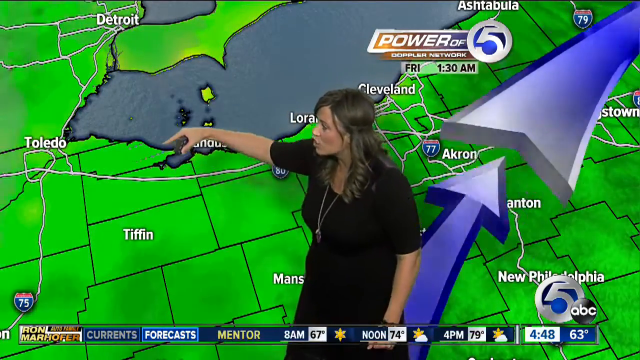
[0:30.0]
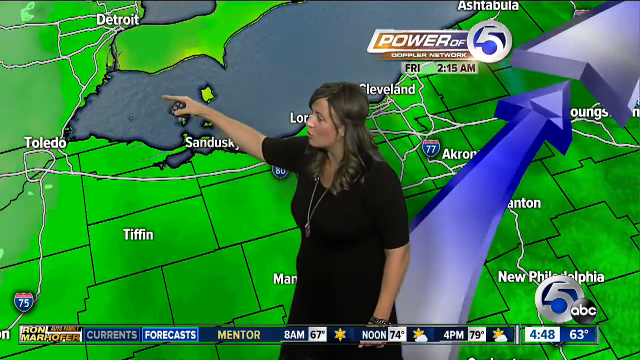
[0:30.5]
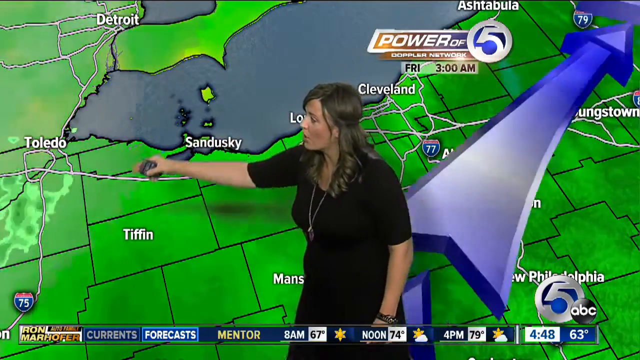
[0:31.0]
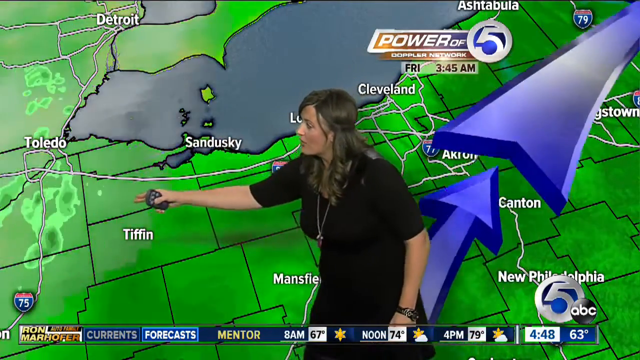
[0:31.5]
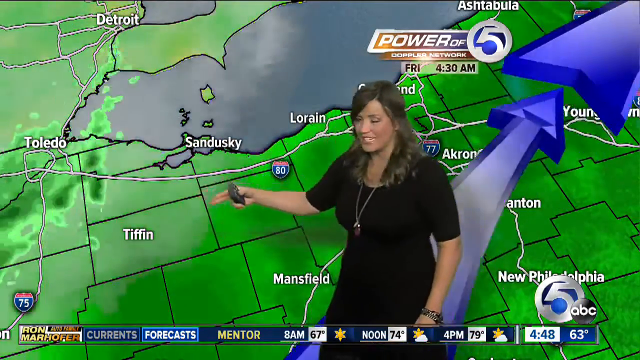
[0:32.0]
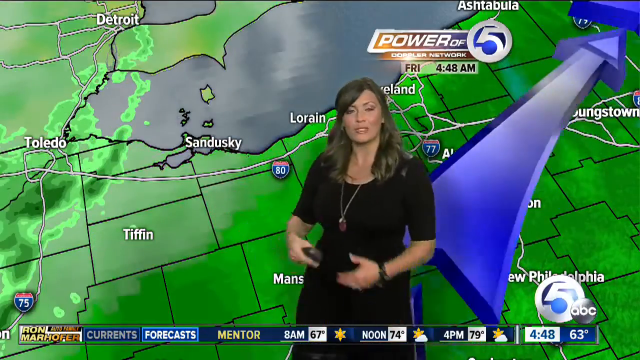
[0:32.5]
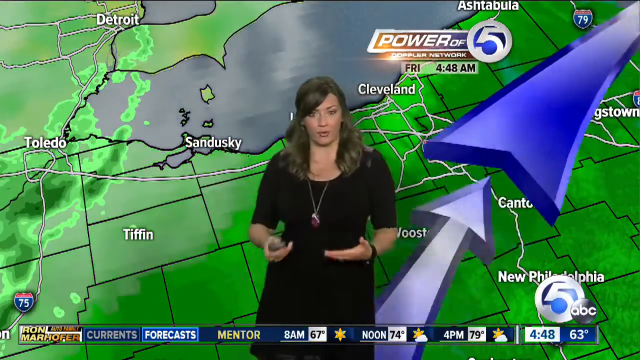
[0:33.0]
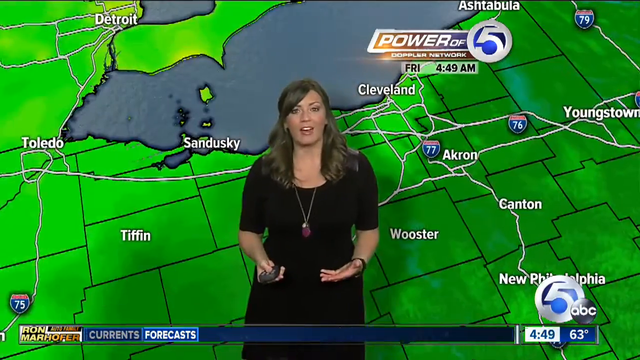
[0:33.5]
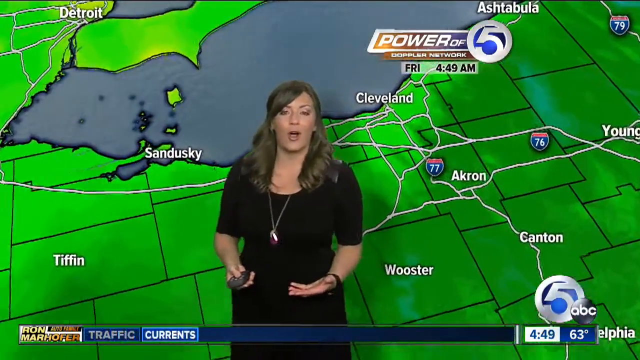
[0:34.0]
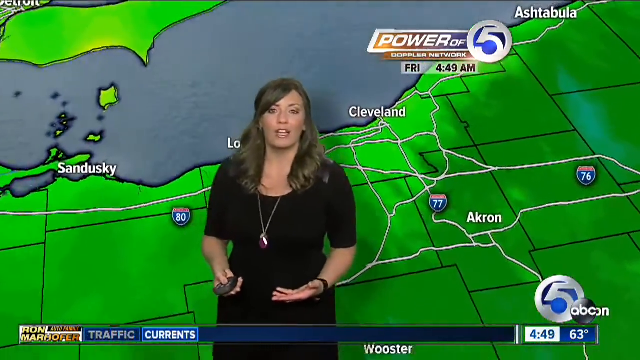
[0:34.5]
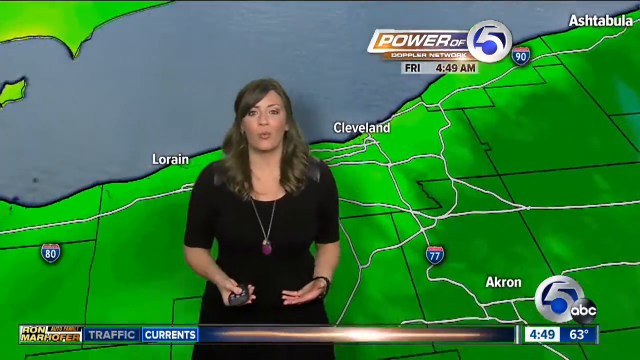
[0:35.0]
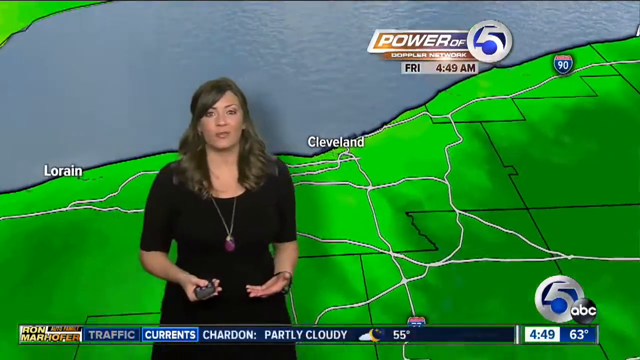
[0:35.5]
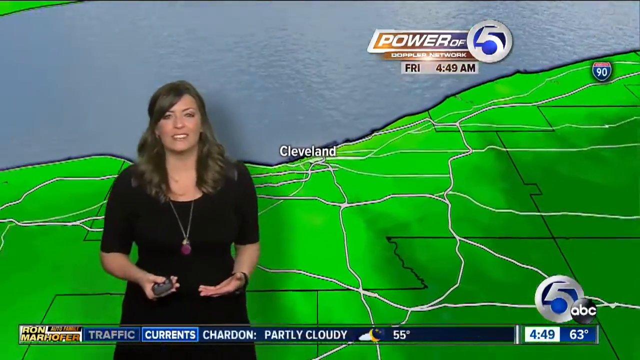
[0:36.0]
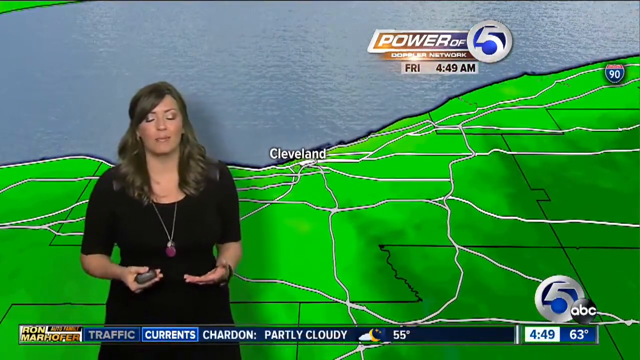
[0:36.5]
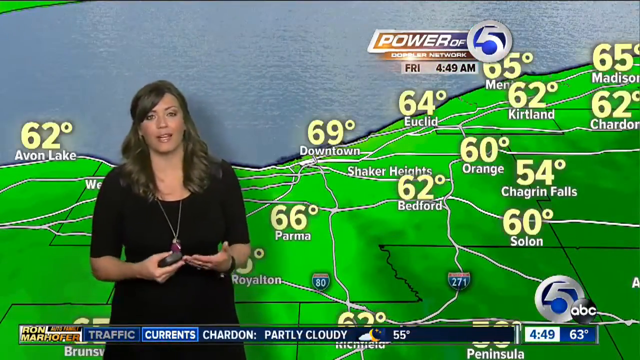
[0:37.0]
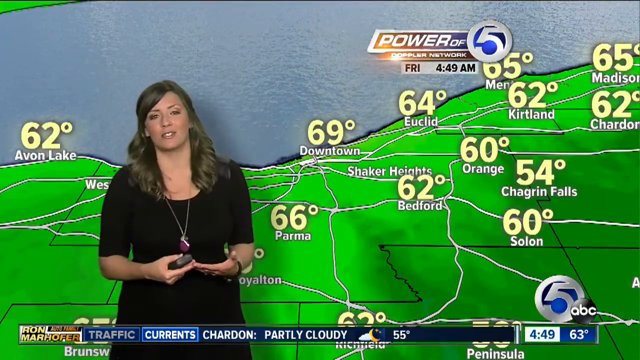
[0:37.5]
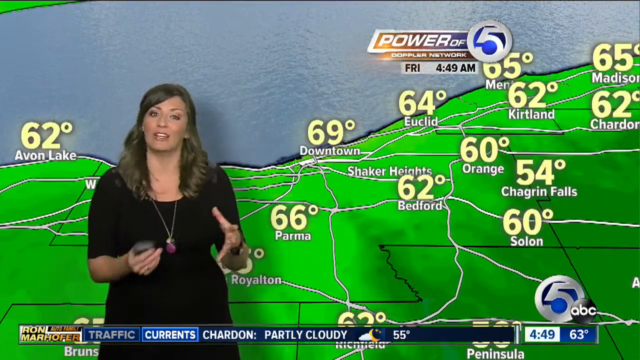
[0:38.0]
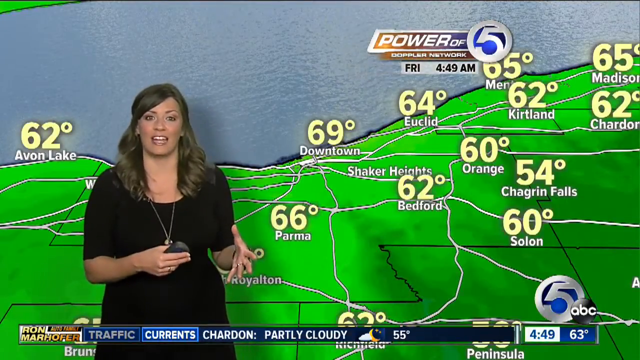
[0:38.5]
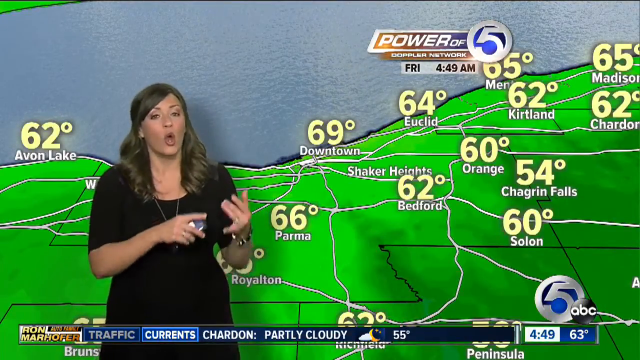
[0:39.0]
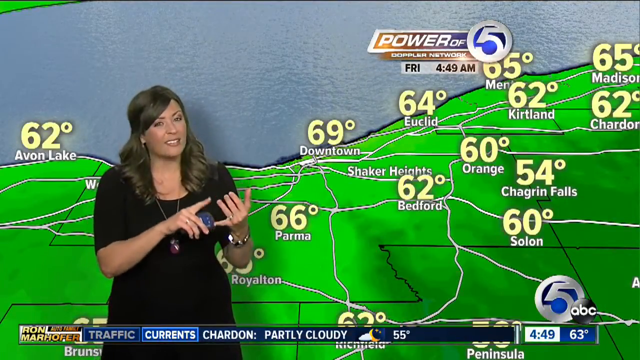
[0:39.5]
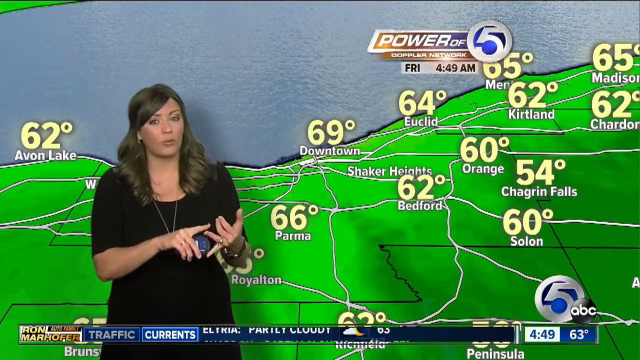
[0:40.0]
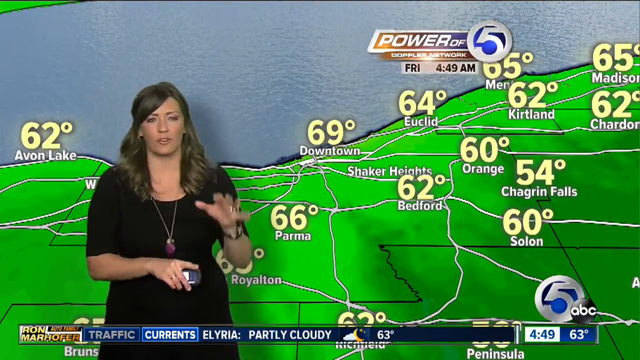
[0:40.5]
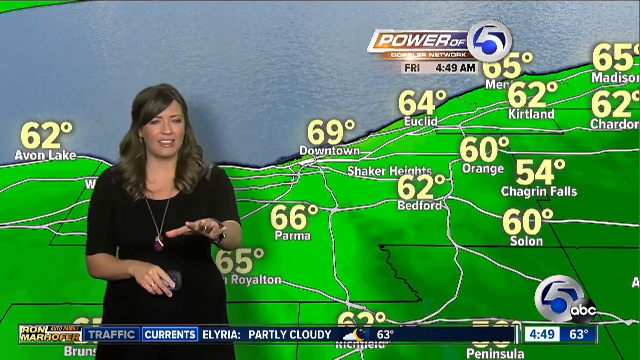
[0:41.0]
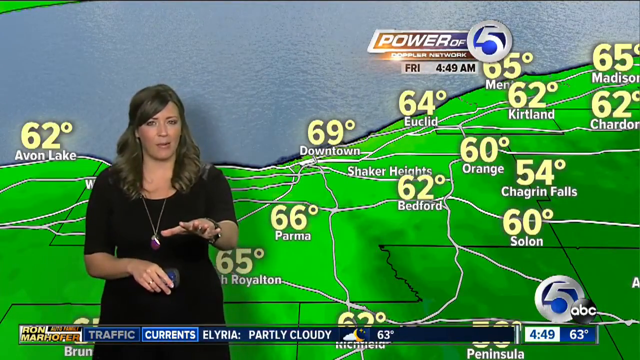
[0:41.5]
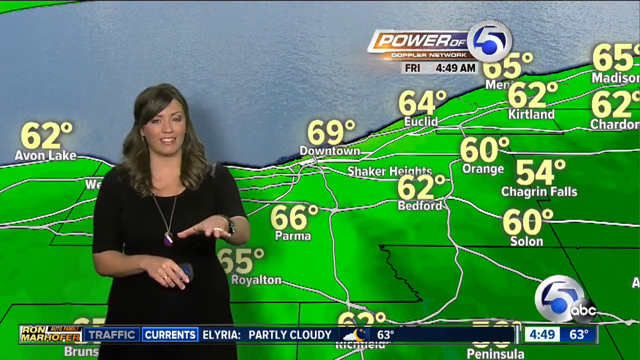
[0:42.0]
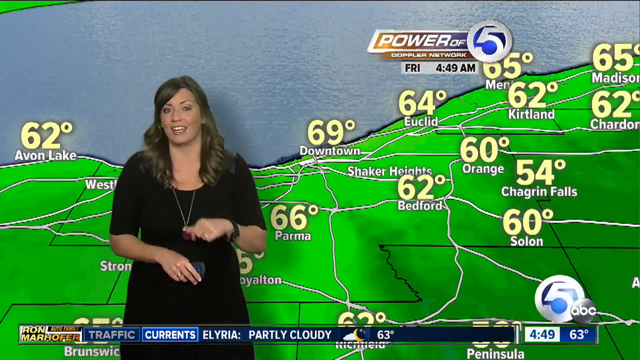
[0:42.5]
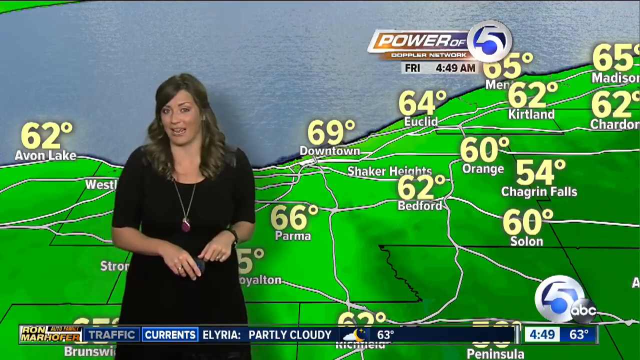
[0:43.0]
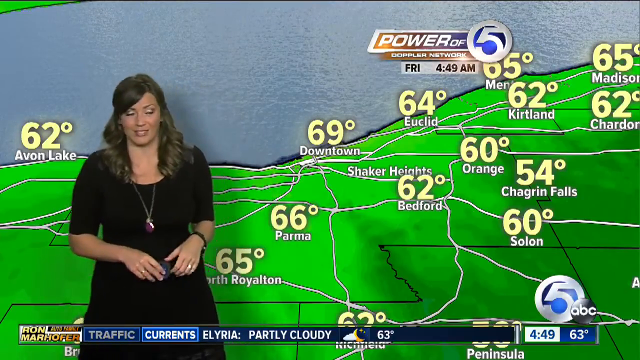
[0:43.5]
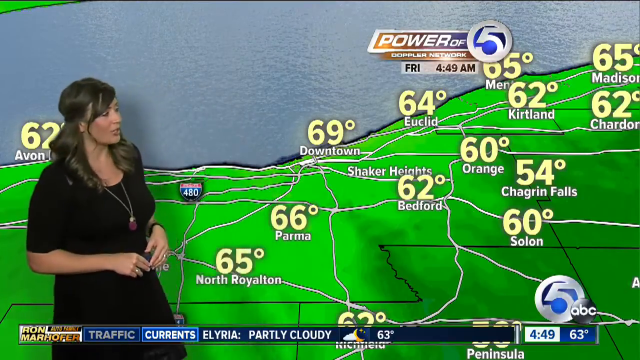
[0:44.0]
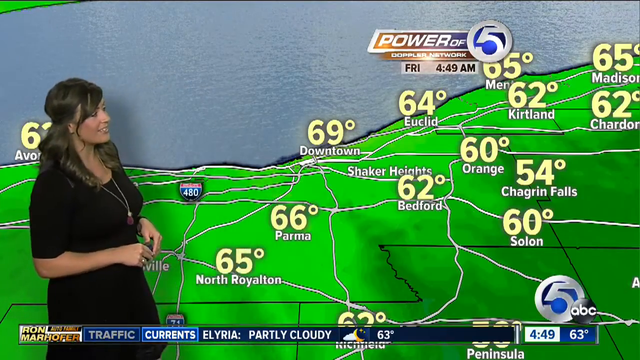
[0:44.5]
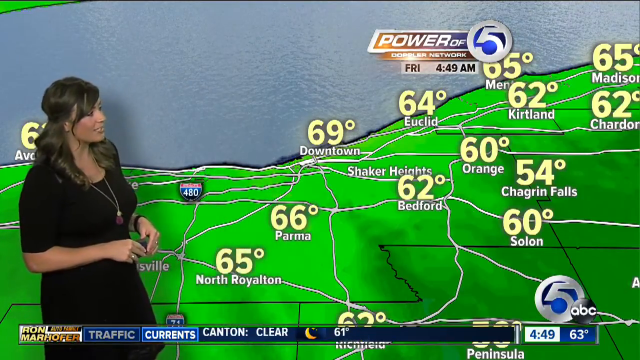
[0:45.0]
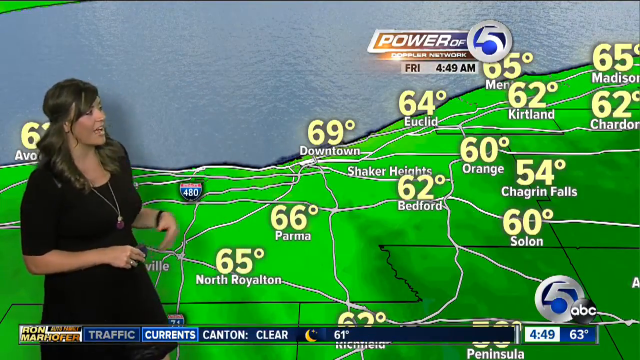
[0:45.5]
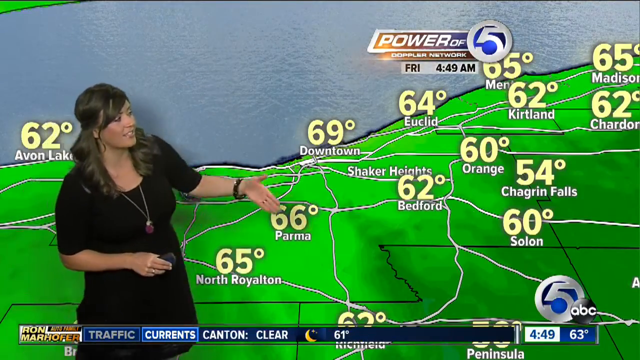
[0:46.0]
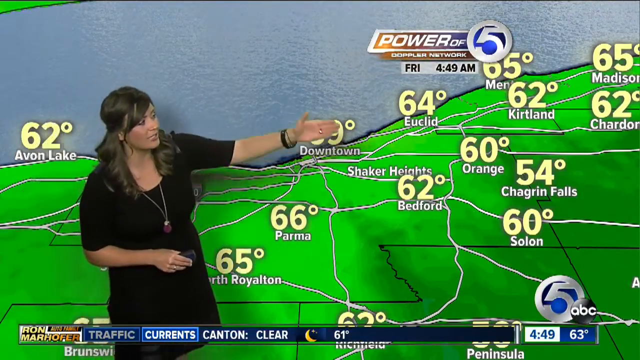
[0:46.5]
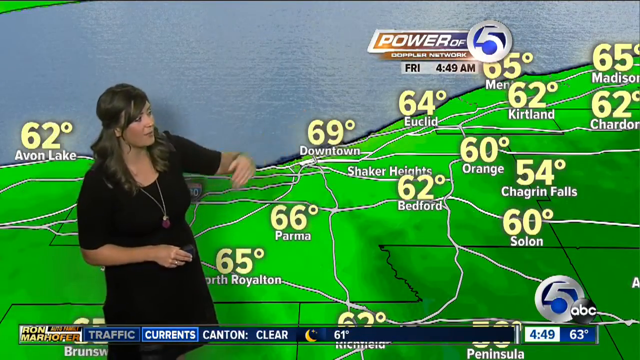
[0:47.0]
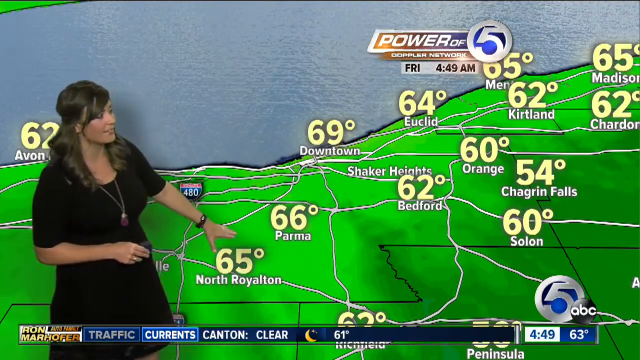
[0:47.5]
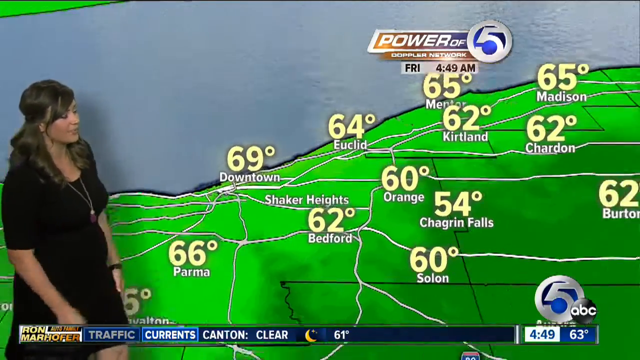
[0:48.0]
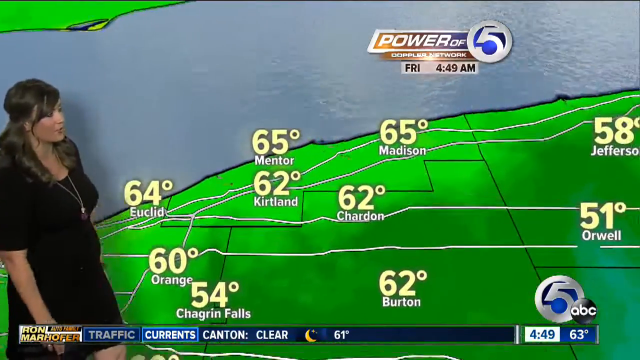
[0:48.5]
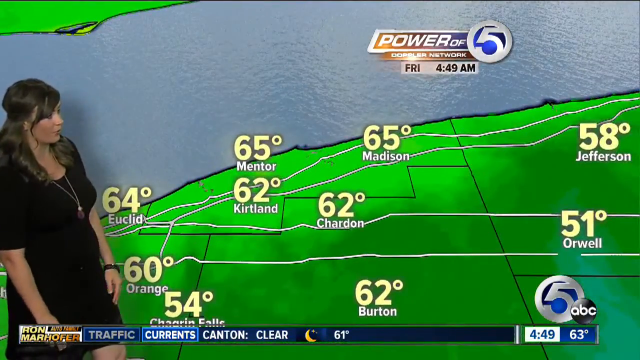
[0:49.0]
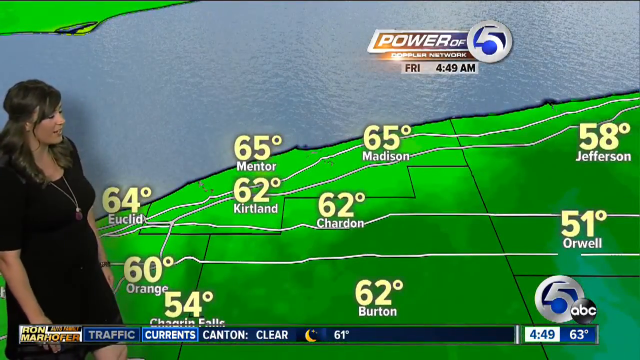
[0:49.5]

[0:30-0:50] Tracy, the weather presenter, wears the short-sleeved black dress and a long chain with a large amulet at the bottom. Her left hand is straight beside her and her right hand points out toward the Tiffin area on the zoomed-in map in the background, which shows I-75. Behind her, large blue arrows come up from the bottom and leave at the top right corner, where "power of 5 Doppler network" appears; right above that it says "Ashtabula". The scene then changes and zooms into Cleveland, where temperatures pop up reading 62, 69 and 66. Most temperatures are in the 60s except Chagrin Falls, which shows a cold 54.